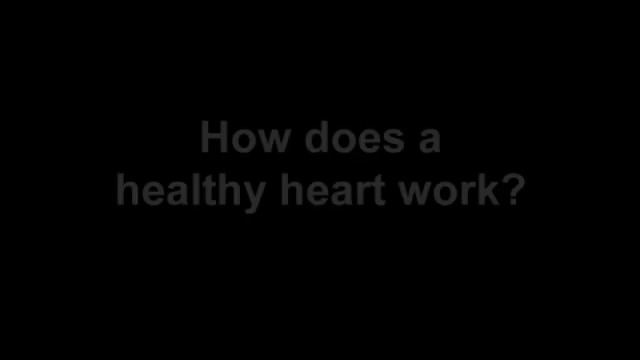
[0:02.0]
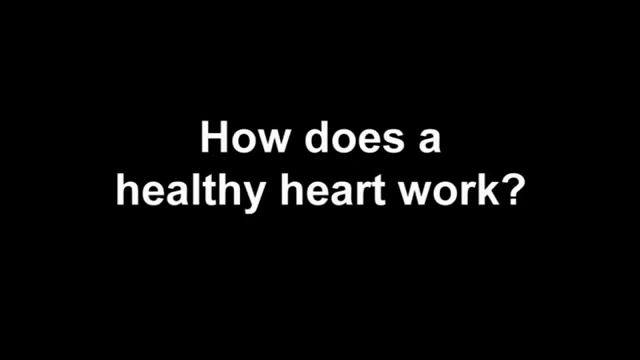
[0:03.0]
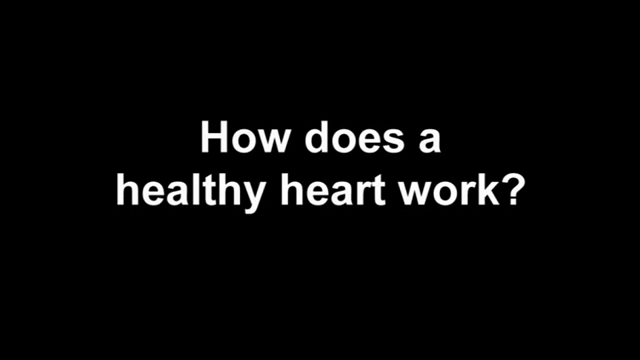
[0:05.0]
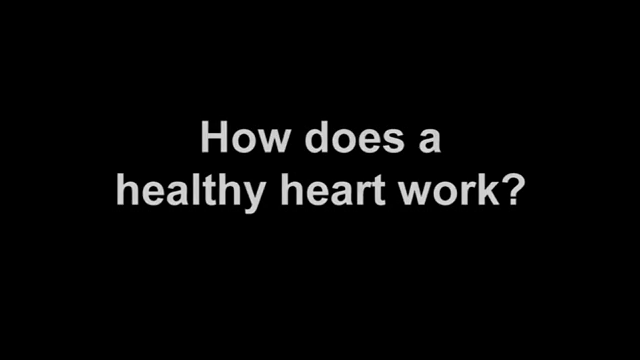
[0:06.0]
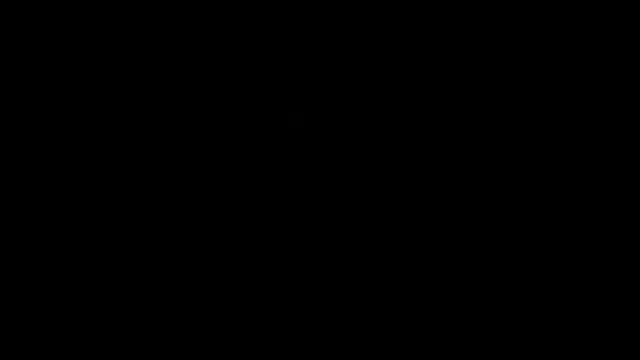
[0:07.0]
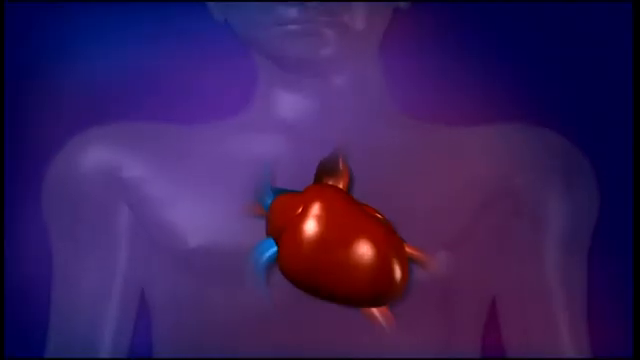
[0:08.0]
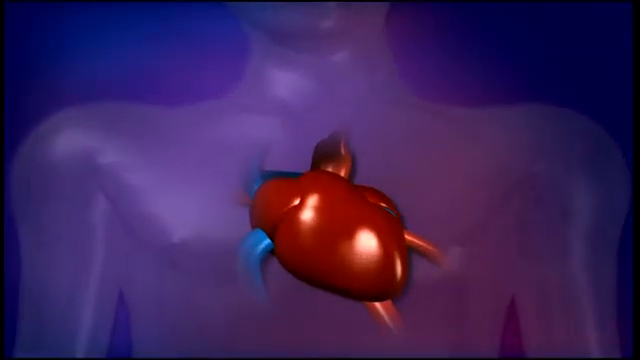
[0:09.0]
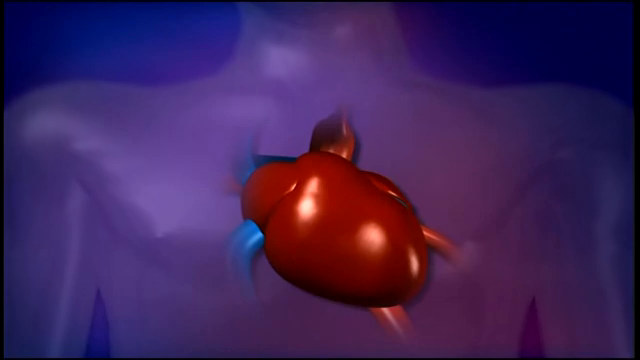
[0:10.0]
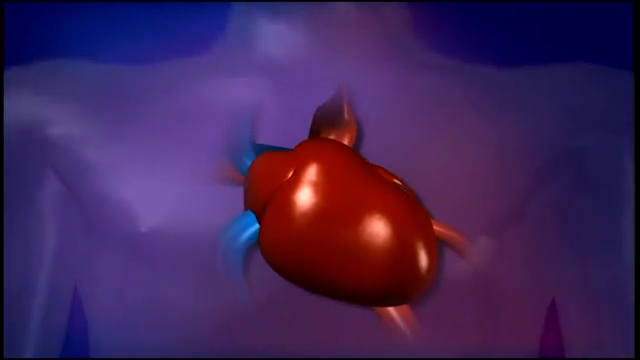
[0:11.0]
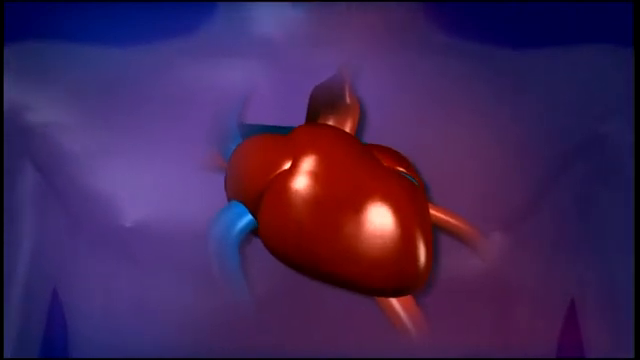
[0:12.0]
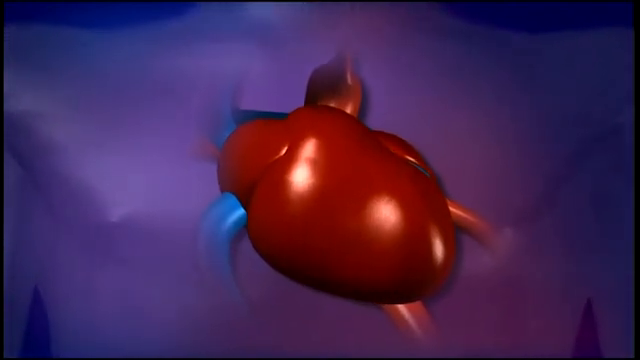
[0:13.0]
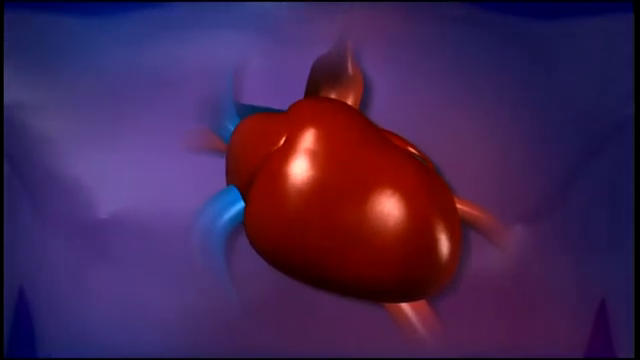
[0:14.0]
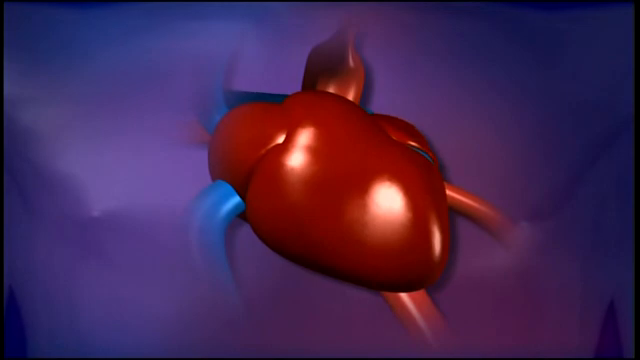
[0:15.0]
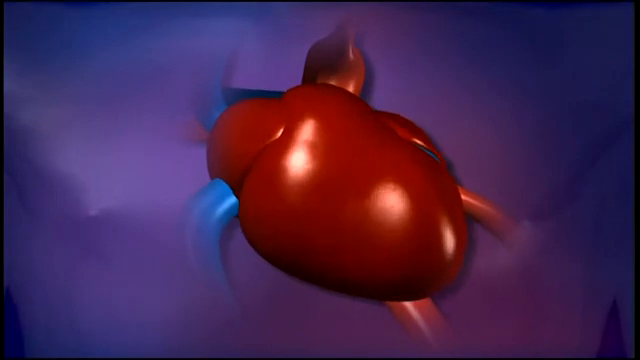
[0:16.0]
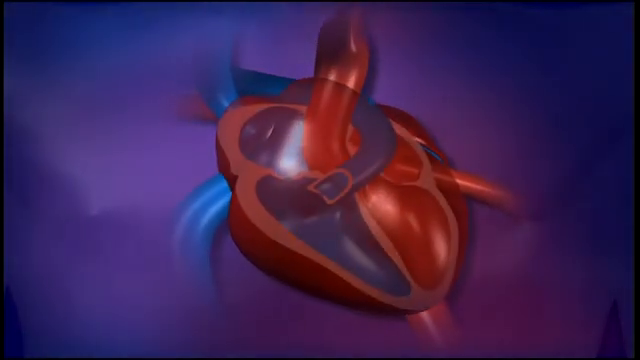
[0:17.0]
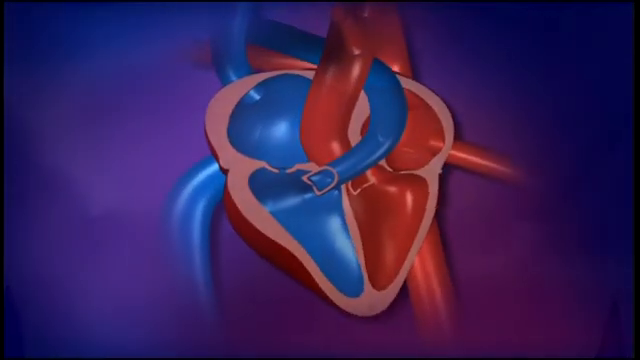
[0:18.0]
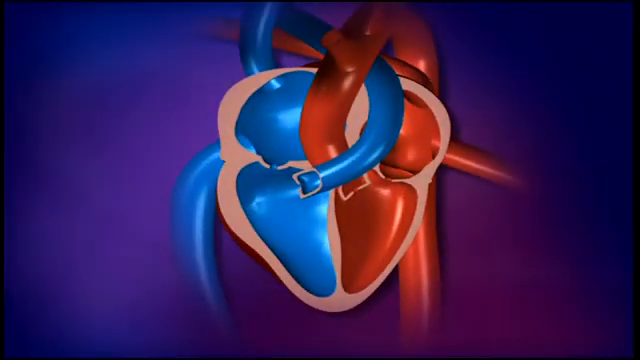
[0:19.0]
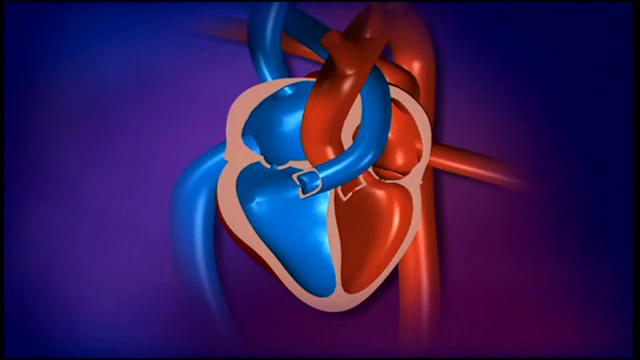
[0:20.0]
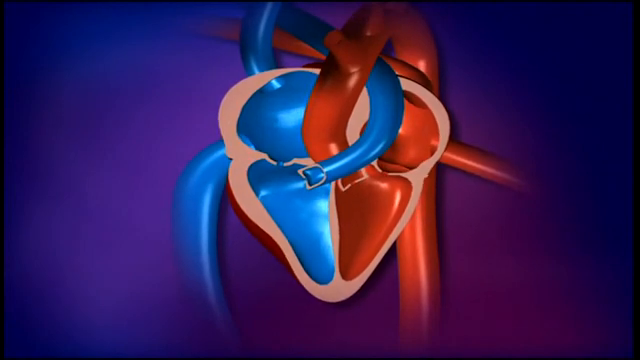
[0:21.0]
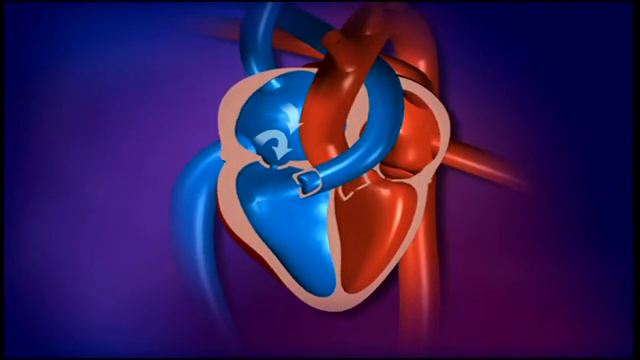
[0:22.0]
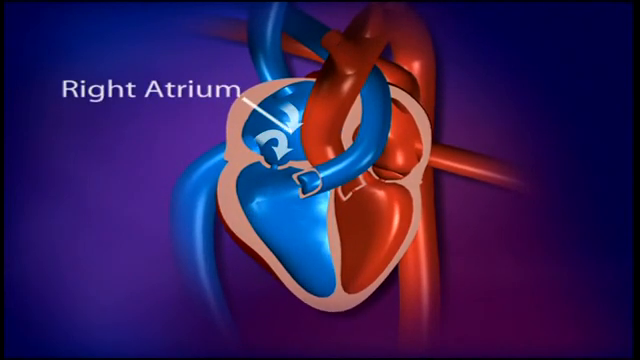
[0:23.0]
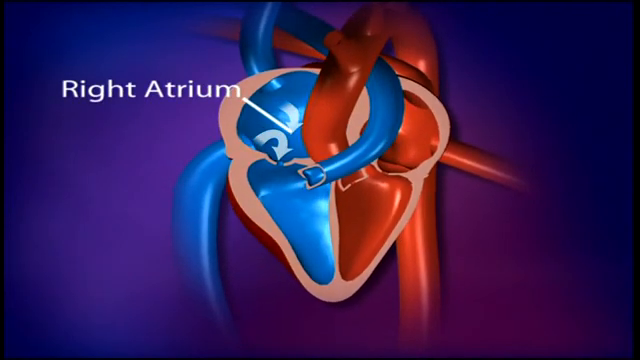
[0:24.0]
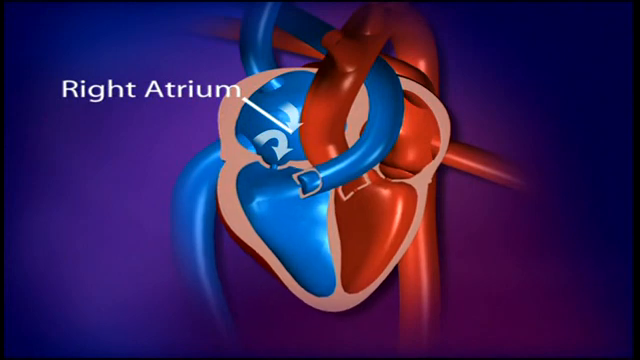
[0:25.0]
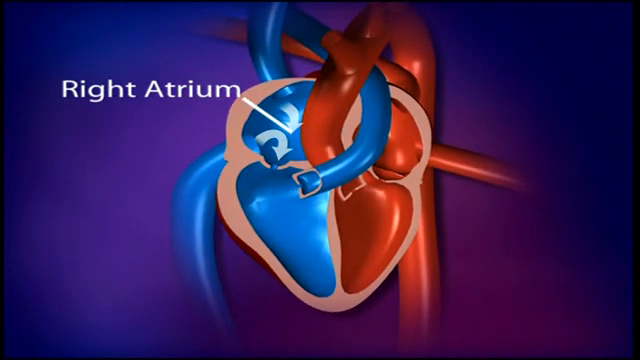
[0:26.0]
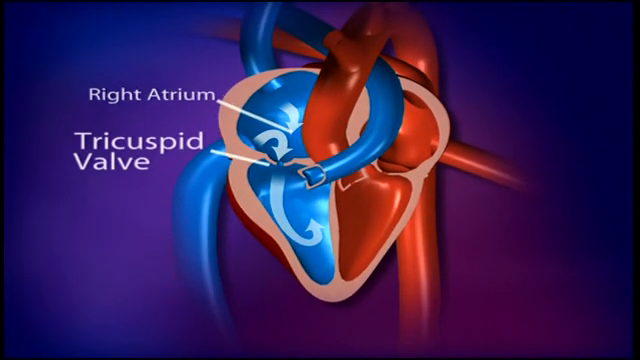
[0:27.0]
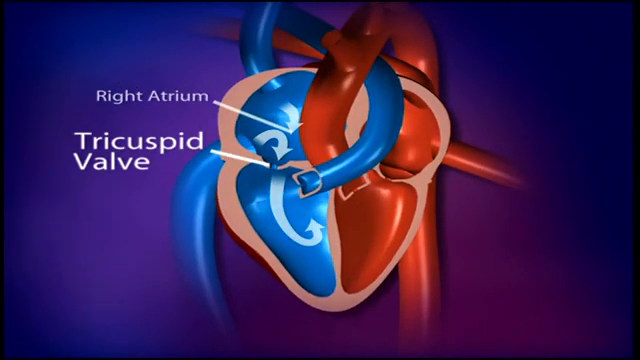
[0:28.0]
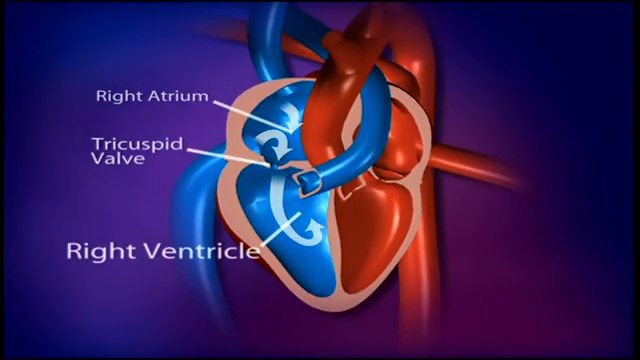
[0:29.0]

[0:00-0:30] A heart is shown, apparently depicting what a beating heart looks like, with its many different channels and connections. Parts of the heart are pointed out: the right atrium, the tricuspid valve, the pulmonary valve and the right ventricle. A part outlined in blue is the pulmonary artery.